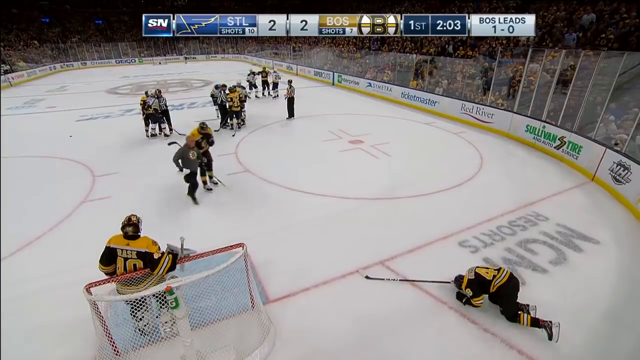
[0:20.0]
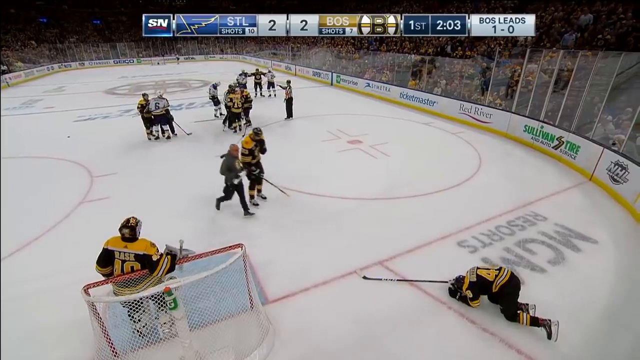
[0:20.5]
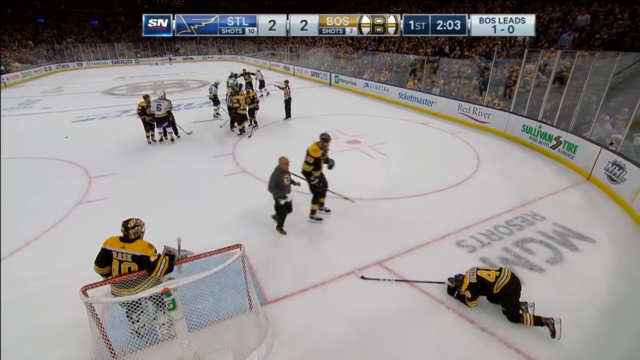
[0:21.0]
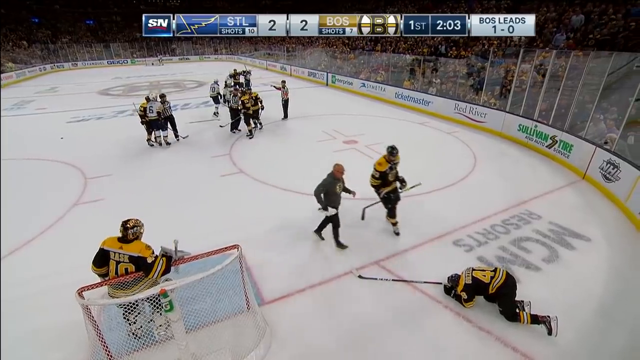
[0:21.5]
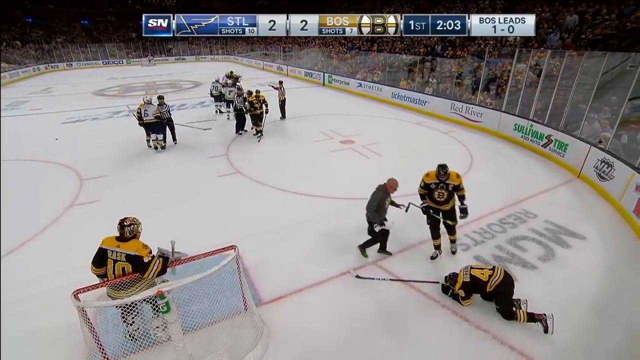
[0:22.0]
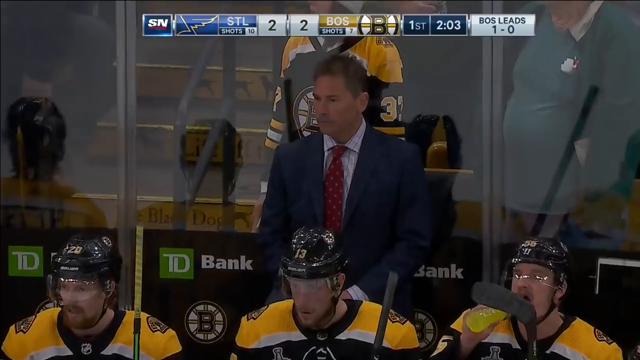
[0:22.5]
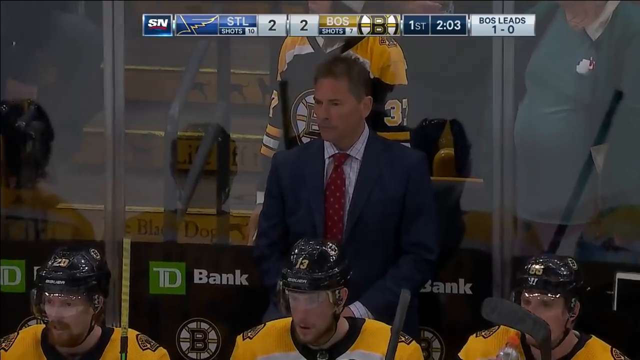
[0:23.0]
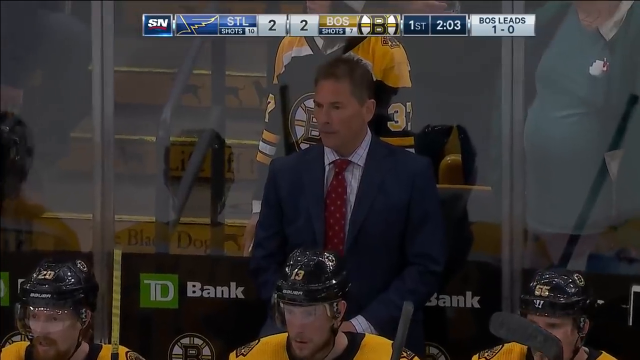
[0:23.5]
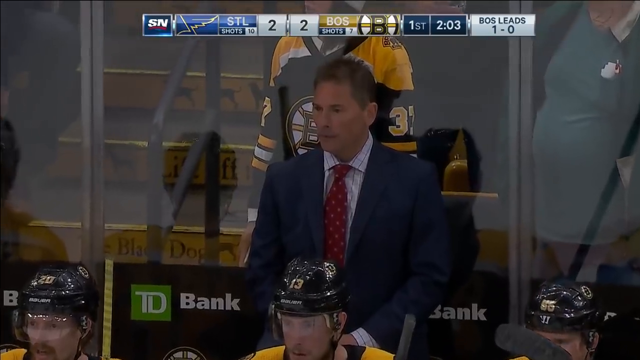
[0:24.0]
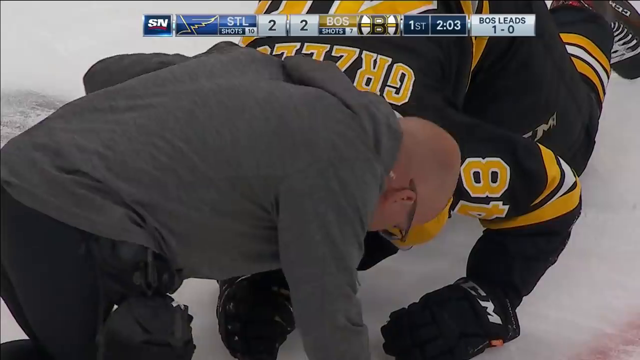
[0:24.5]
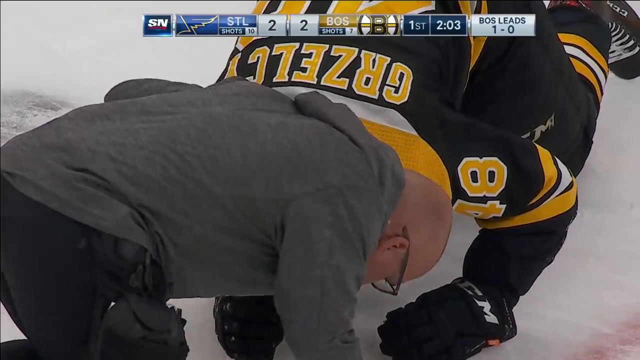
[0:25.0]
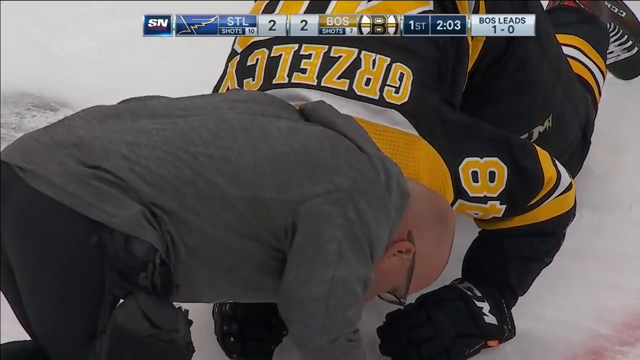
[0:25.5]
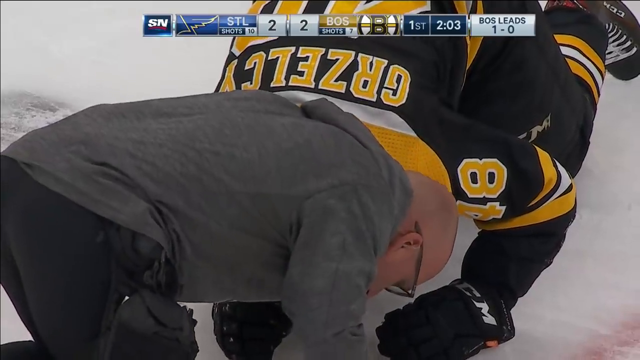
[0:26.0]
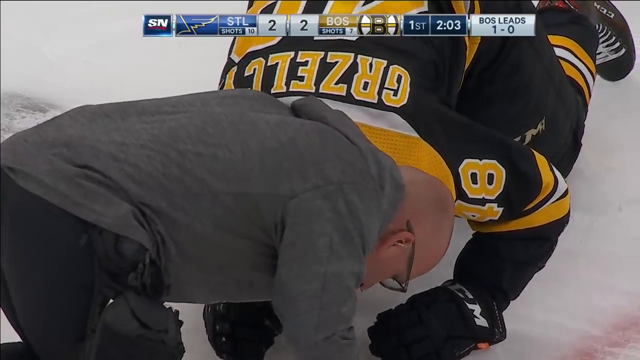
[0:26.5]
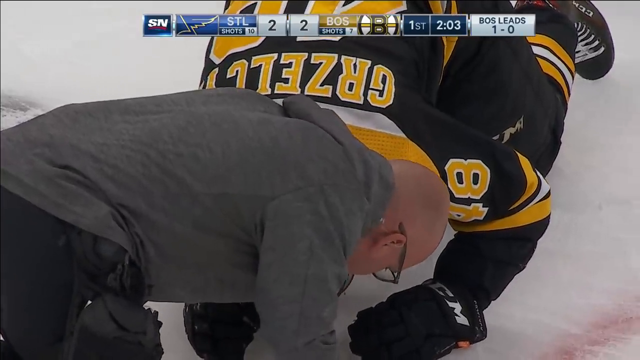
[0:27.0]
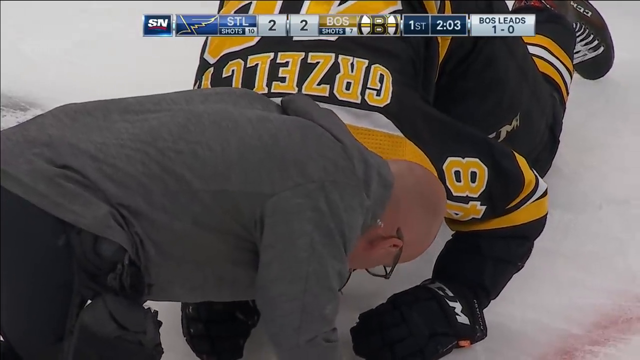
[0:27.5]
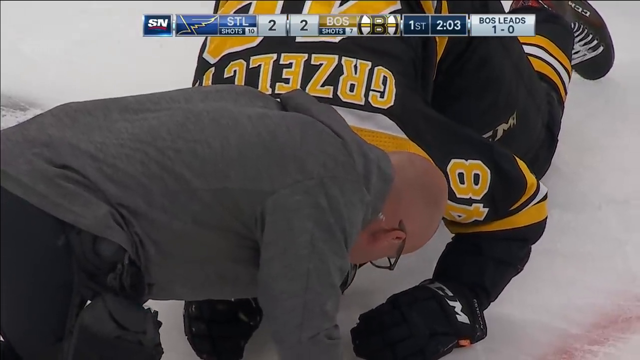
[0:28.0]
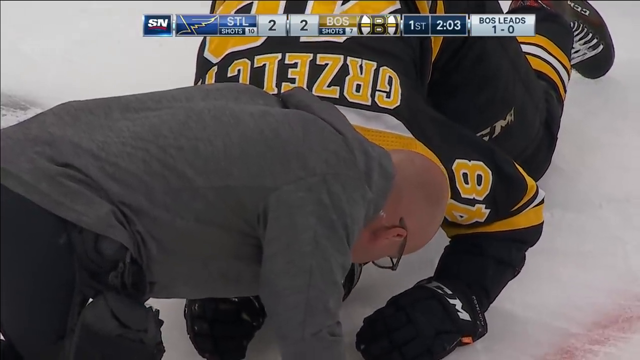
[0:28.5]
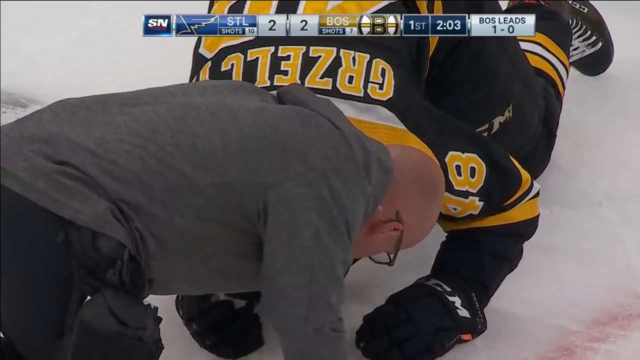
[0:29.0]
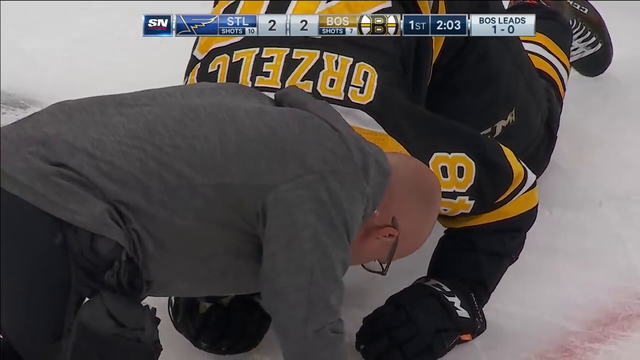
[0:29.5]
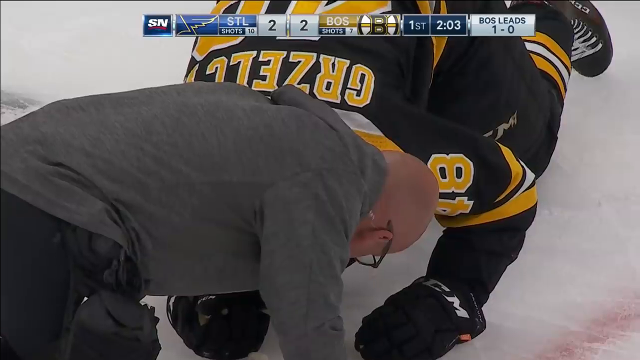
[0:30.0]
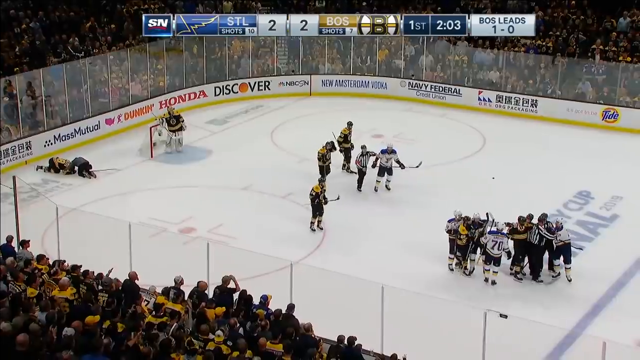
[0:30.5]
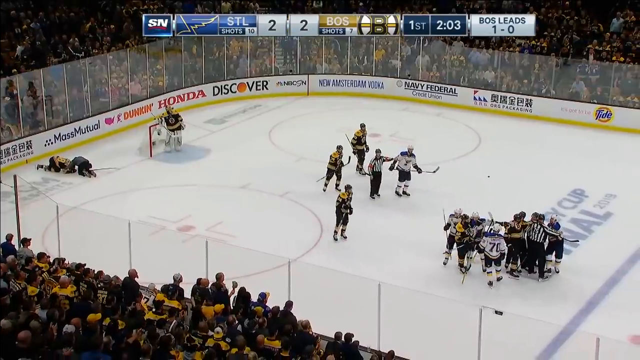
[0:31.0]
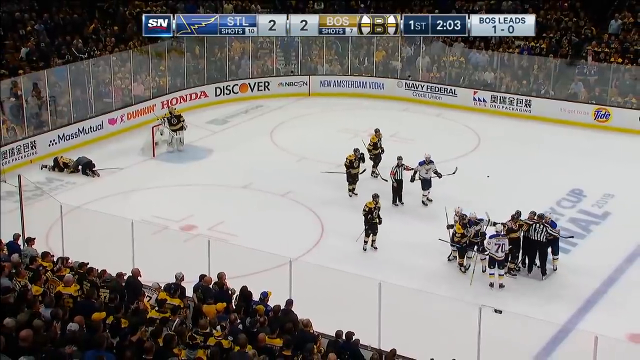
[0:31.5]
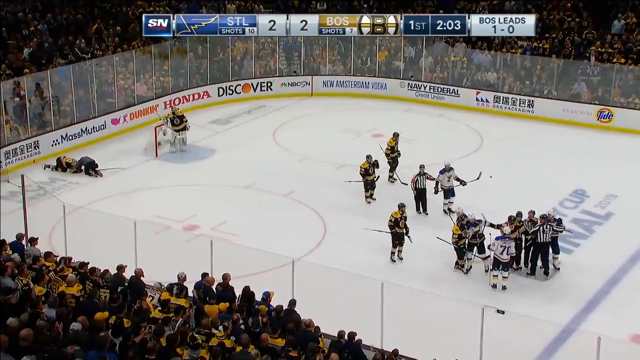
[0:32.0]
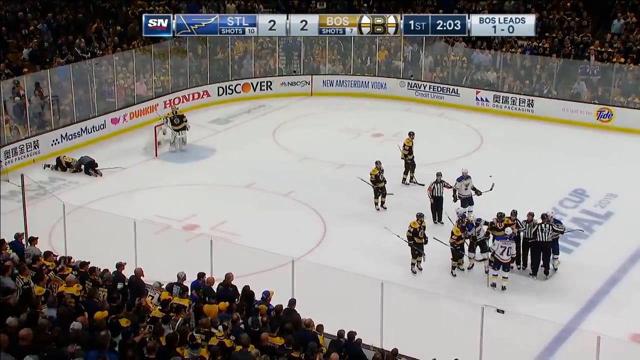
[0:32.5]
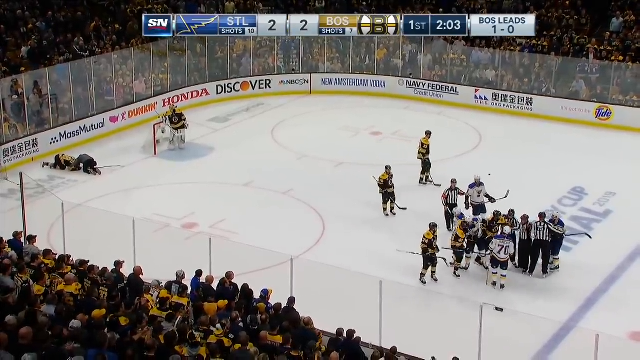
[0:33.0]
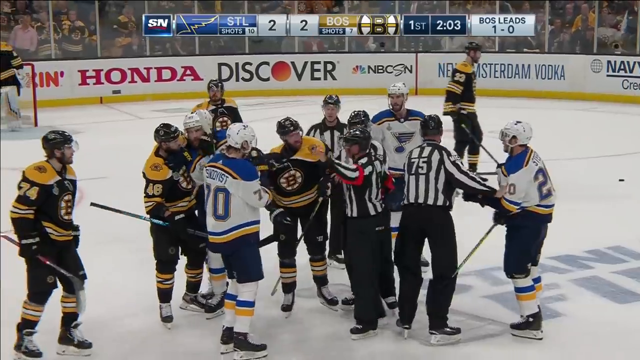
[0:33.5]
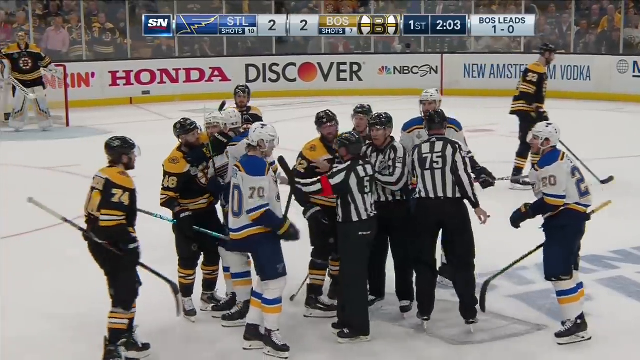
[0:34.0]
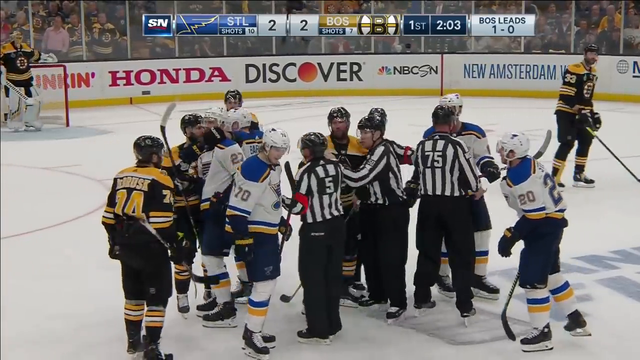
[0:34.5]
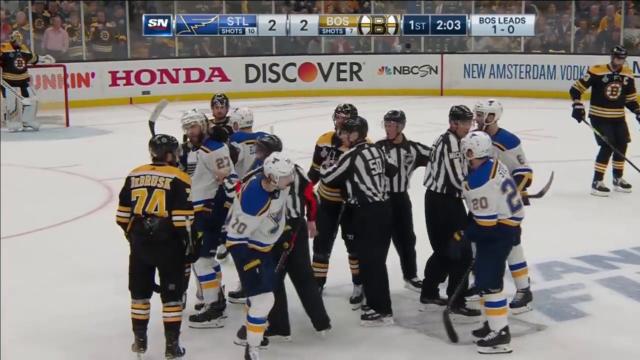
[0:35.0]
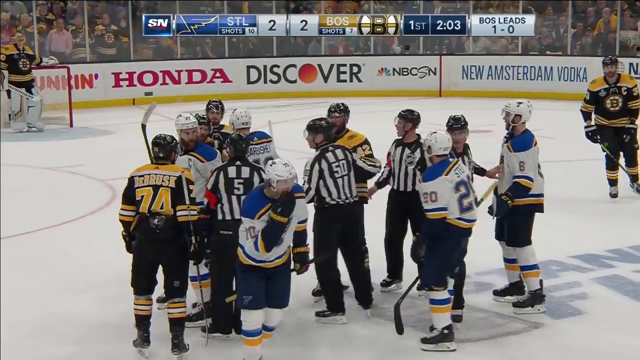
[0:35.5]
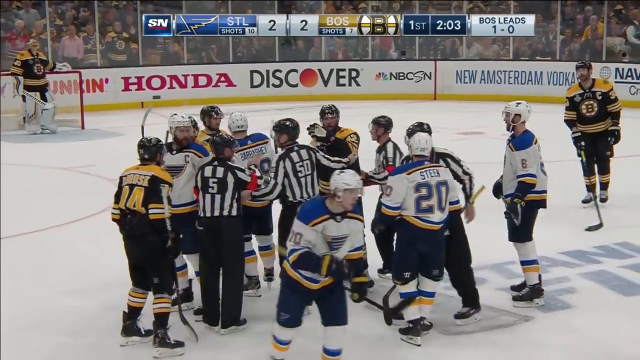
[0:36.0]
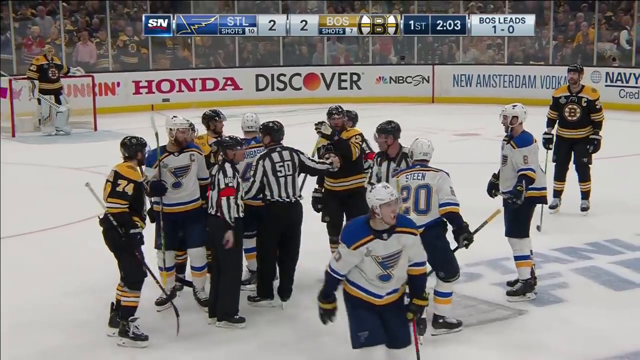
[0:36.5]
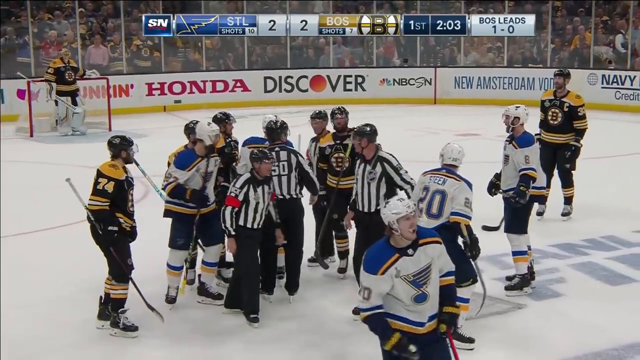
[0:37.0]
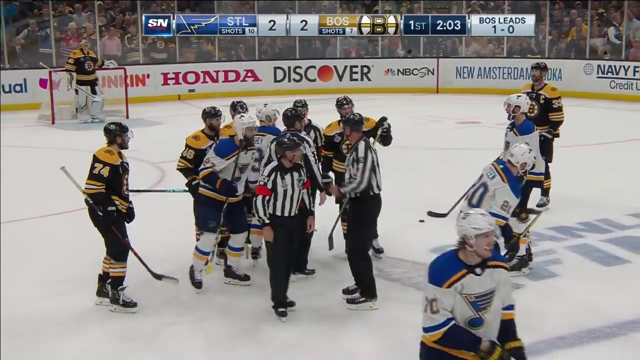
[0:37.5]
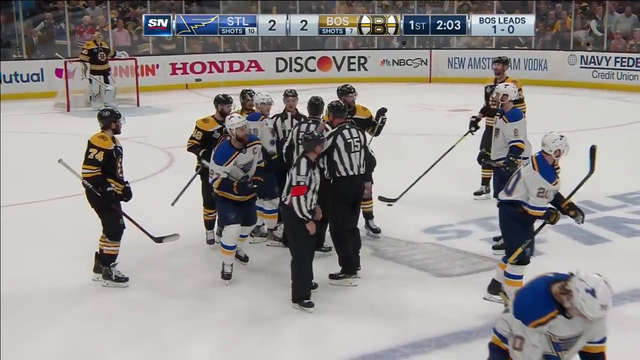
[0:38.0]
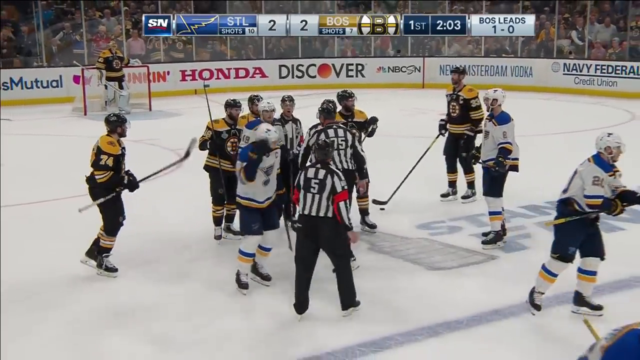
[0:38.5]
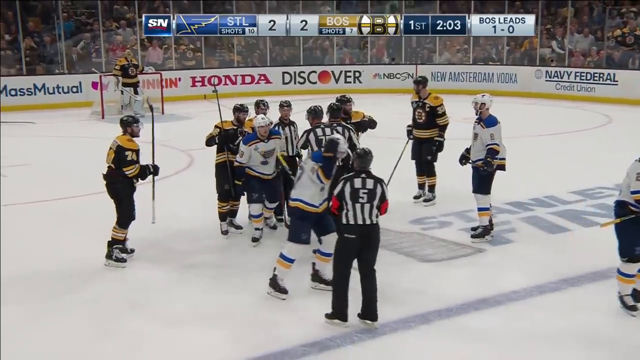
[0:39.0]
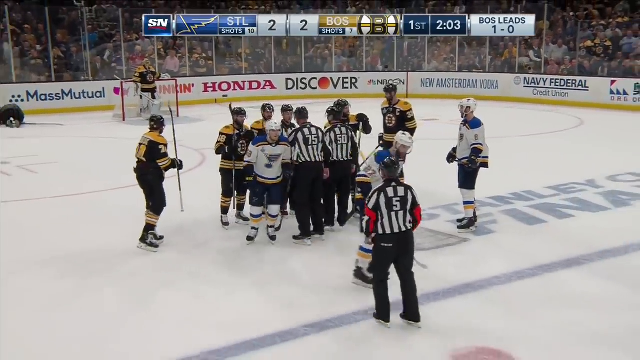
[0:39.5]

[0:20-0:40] A couple of people approach a hockey player who is on the ground on his knees and elbows, his face down on the ice. A person in a gray jacket walks up to him, and a player in yellow and black also comes over. The shot then changes to a man in a blue suit and red tie, and the view zooms in on him; a couple of players in yellow and black are below him, some people are behind a screen, and "TD Bank" appears behind the man. Next comes a close-up of the bald man in the gray jacket, who wears glasses. The back of the injured player's shirt is visible, upside down, reading something like "Grzelcy". The two appear to be talking, with the man in the gray shirt leaning down to listen to the player. The score tallies for the teams are shown at the top of the screen. The other players huddle up and talk to each other, and they appear to be broken up by the referees; a few referees are there talking to all the players, who then break apart and go off on their own.